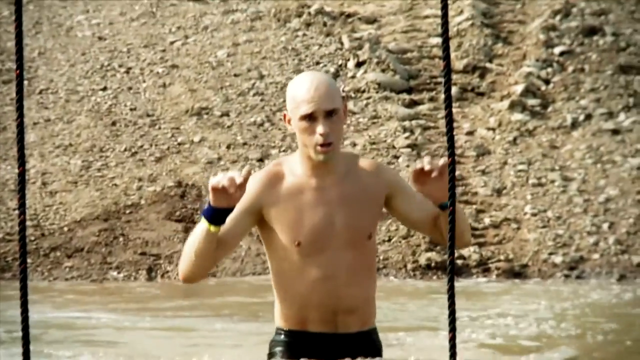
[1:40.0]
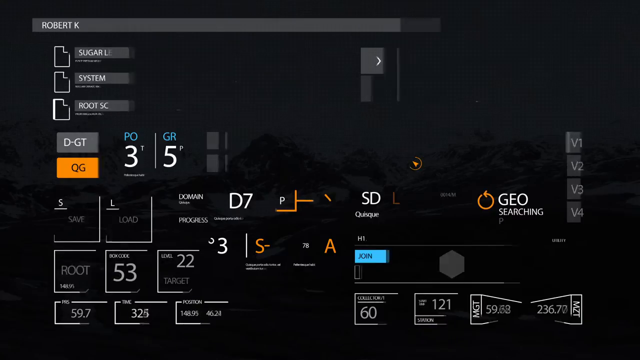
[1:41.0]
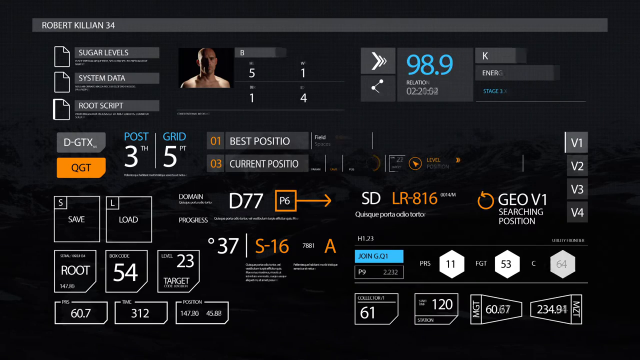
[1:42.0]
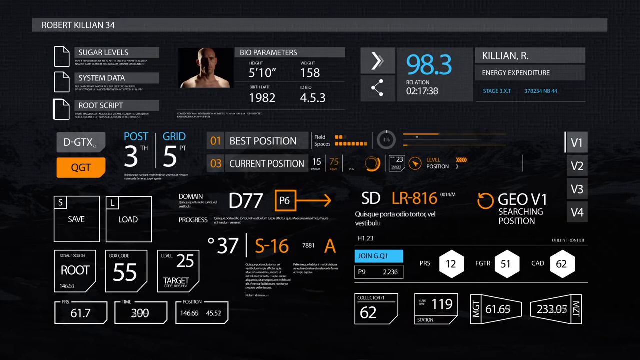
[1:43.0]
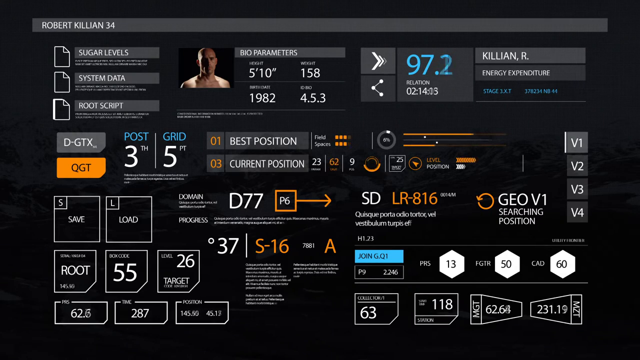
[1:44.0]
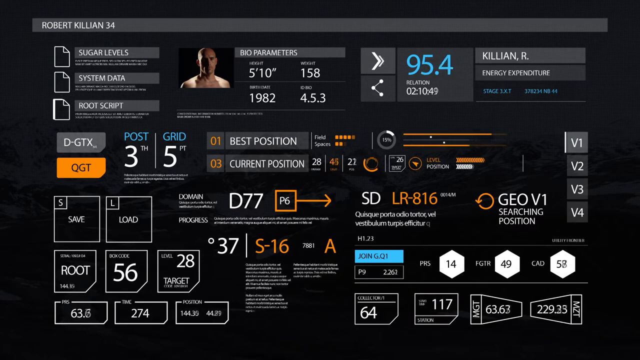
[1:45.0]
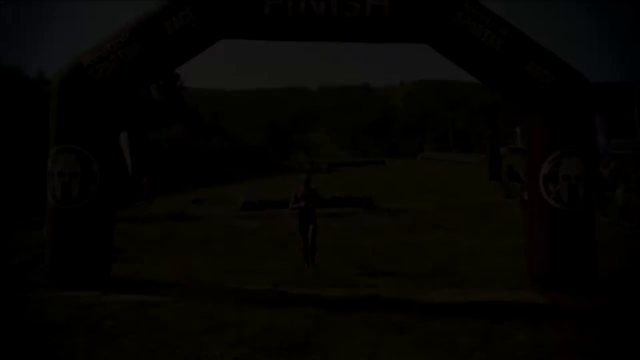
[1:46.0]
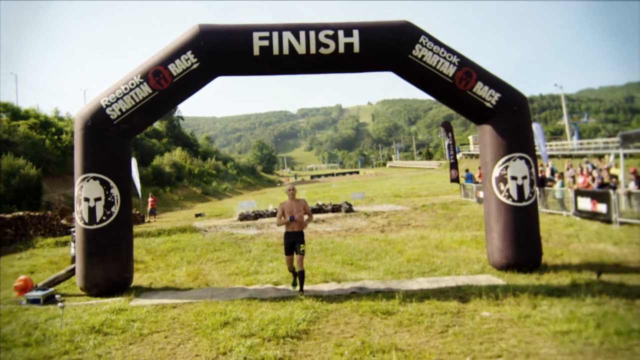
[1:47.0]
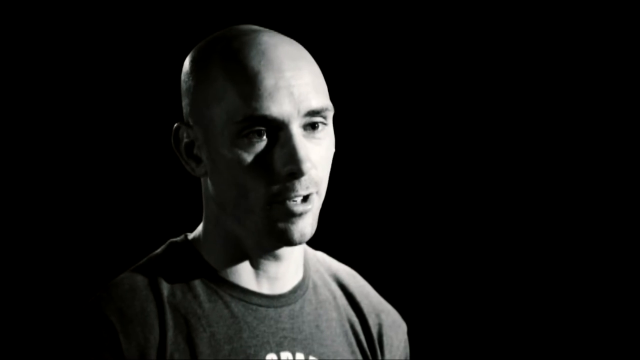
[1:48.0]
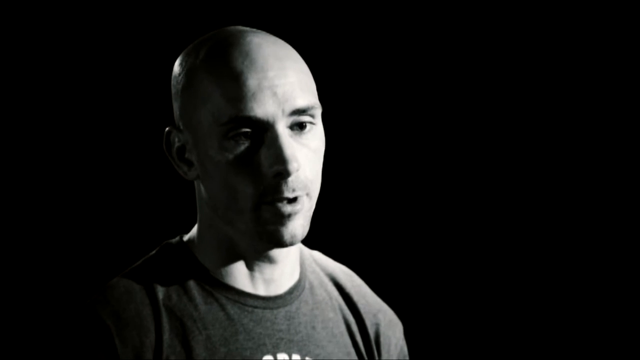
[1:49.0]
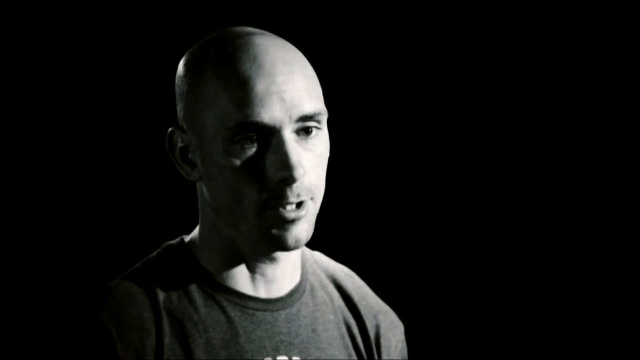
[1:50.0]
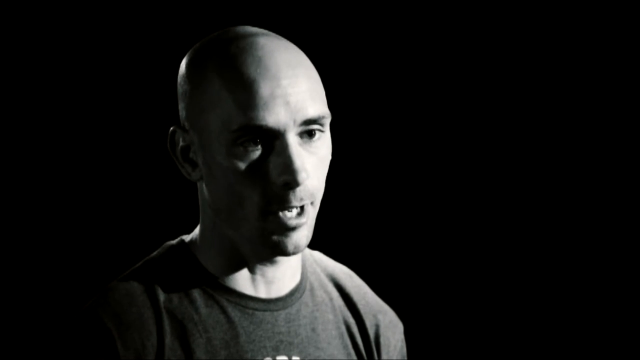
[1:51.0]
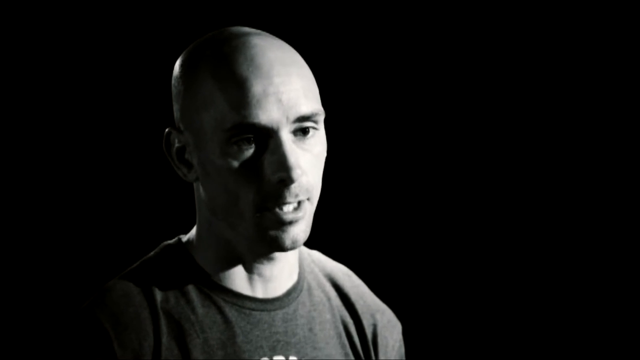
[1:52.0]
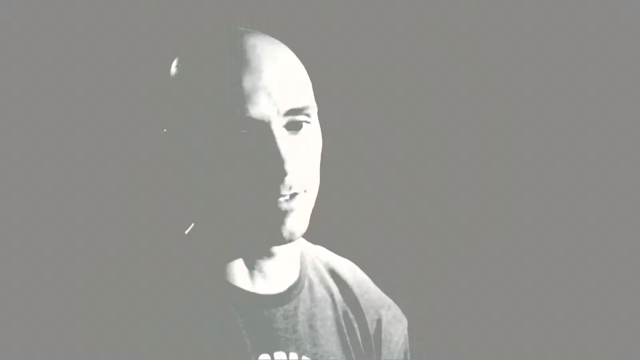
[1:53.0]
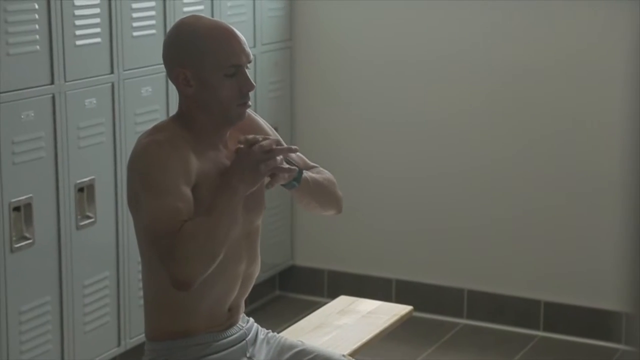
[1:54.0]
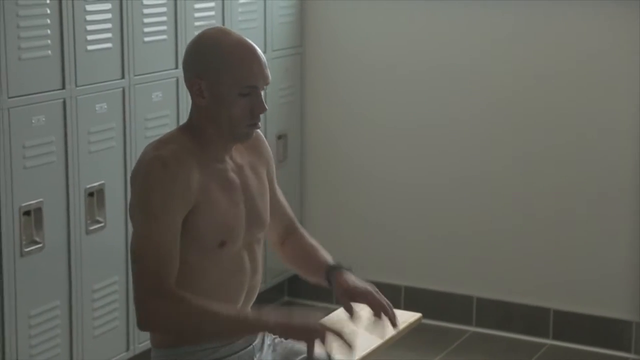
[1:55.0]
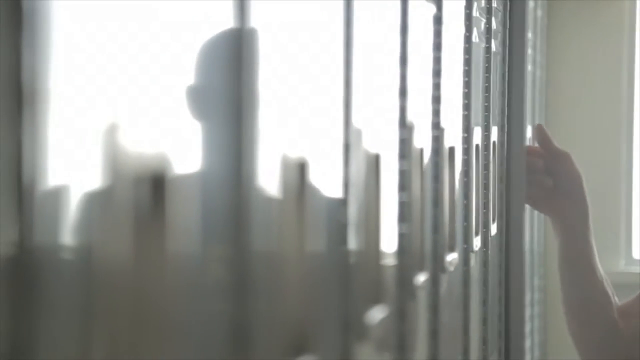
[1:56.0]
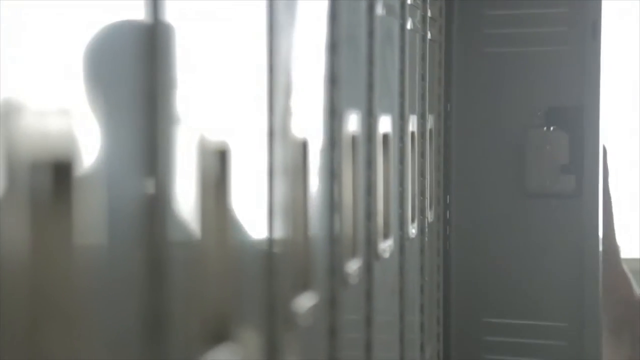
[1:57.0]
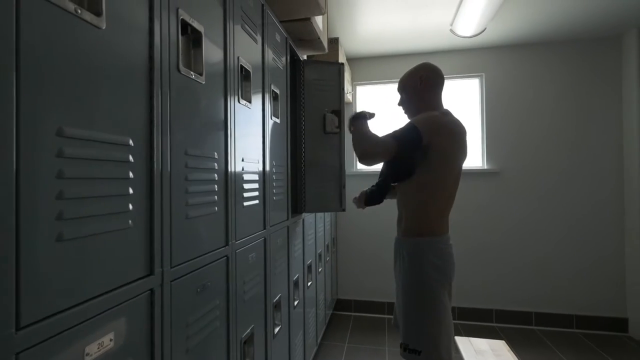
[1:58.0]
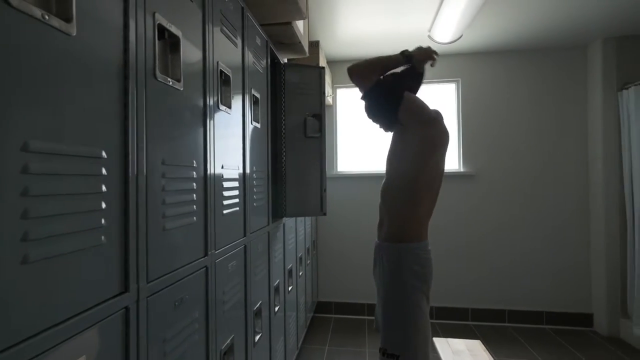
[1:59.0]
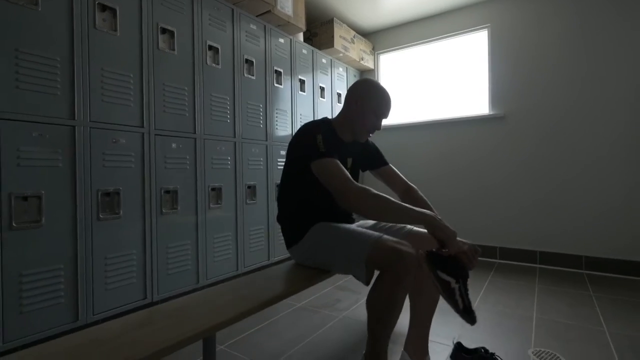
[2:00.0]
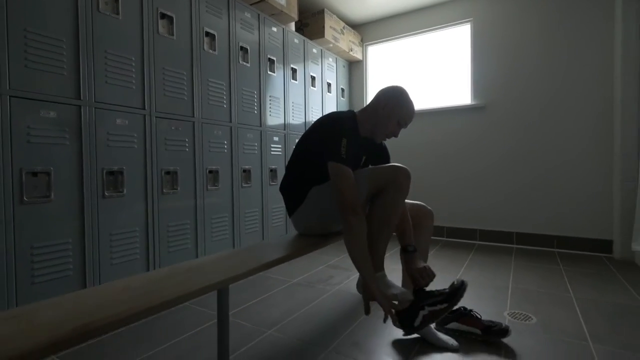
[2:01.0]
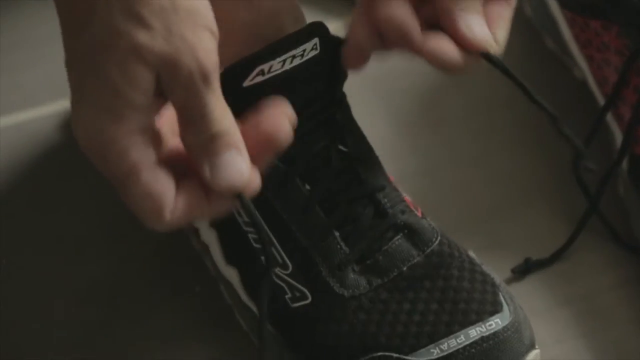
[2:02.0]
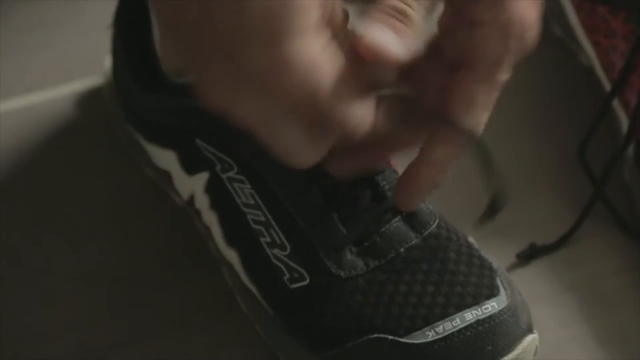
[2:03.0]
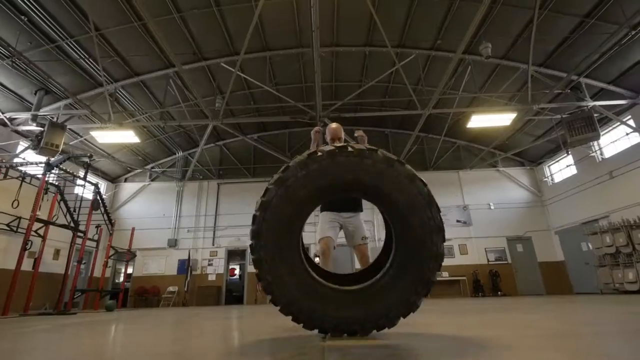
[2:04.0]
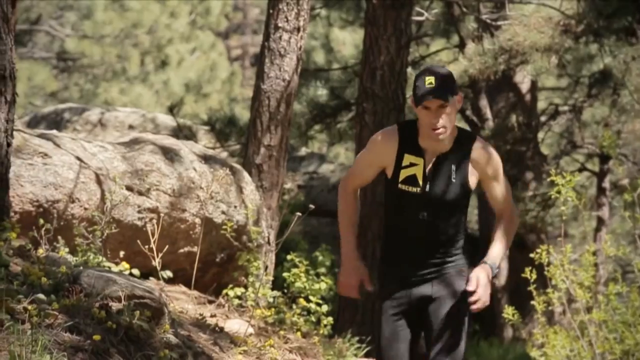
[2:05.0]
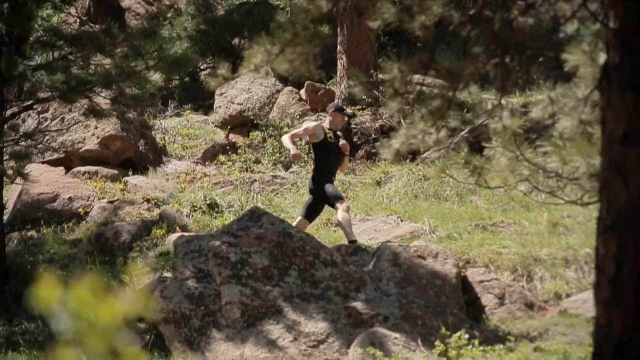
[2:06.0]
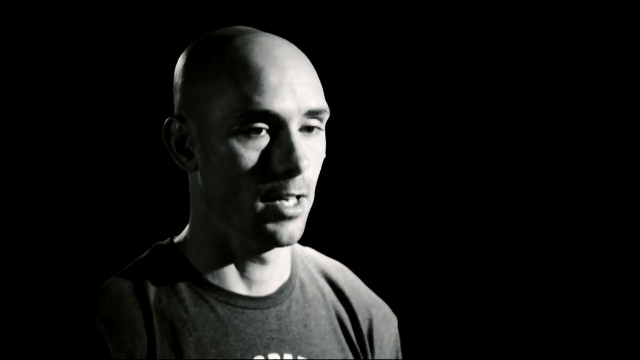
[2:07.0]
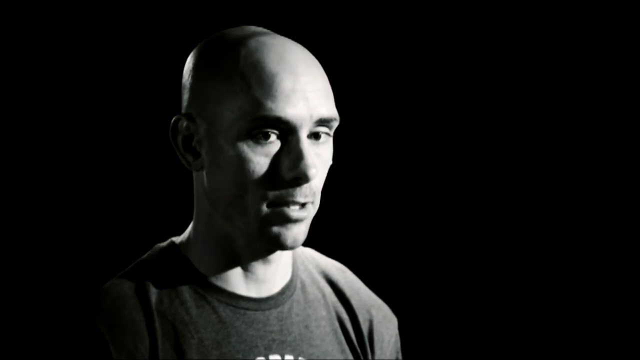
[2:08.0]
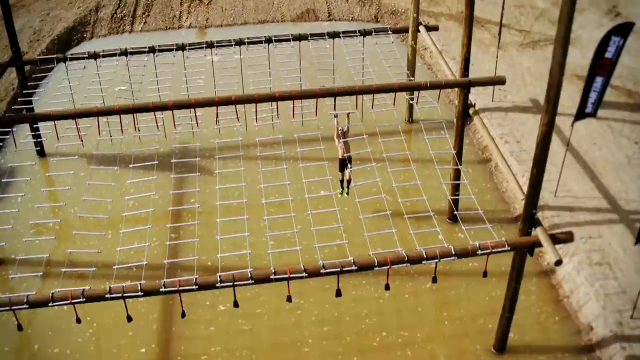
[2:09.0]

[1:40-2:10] The racer walks somewhat slowly through water up to about his waist, with his arms and hands raised a little. A computer screen shows all kinds of visual elements: sugar levels and system data in the upper left, what may be his BPM on the right, a small tile with a headshot of him, and various diagrams. The numbers are moving, so it looks to be real time. He is seen coming to the finish line for about two seconds, then is interviewed again in the same black and white look. Next, he appears to be in a locker room with gray lockers behind him, sitting down without a shirt, seemingly resting, with his arms in front of him by his chest. In the locker room he puts on a shirt, slightly in slow motion, and then laces up his sneakers. A couple of activity images follow: him lifting and flipping a large tire over, and him running.